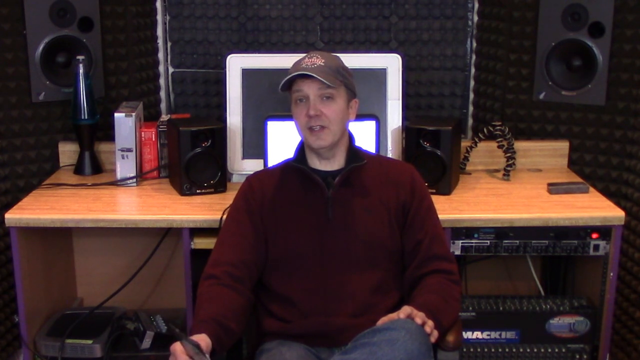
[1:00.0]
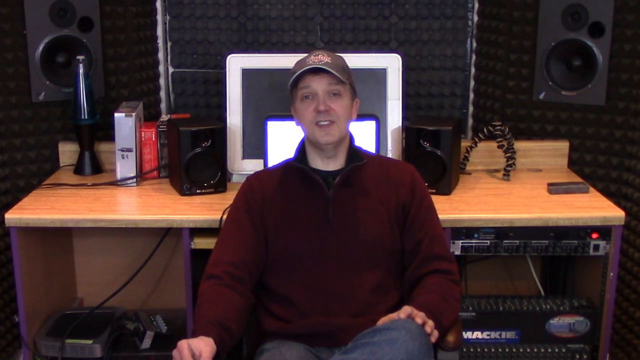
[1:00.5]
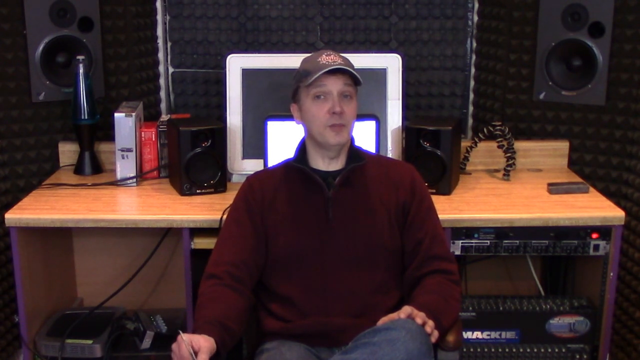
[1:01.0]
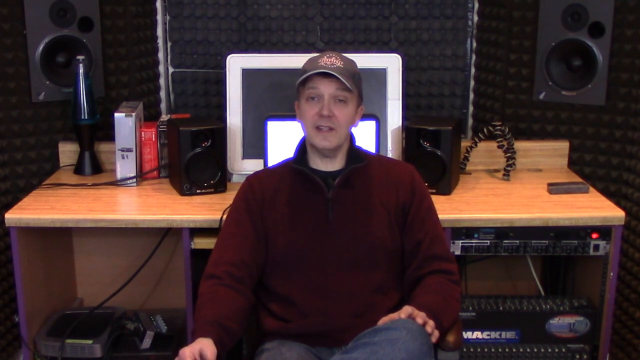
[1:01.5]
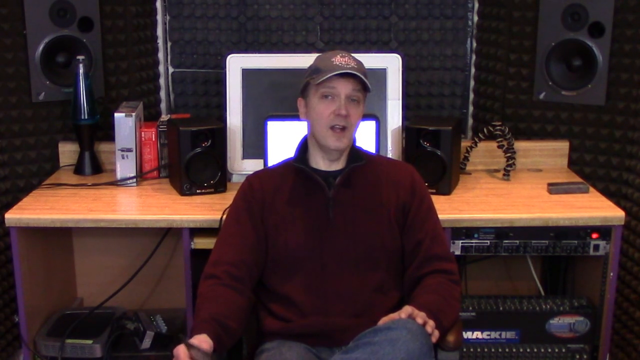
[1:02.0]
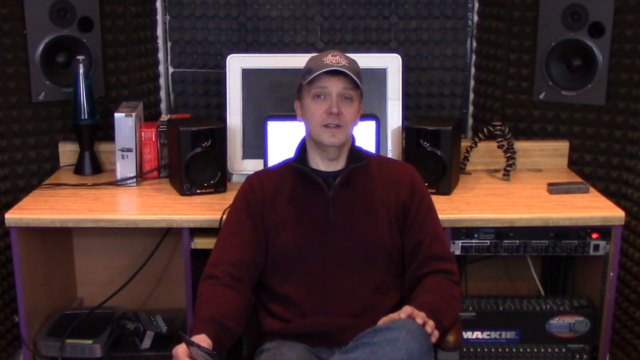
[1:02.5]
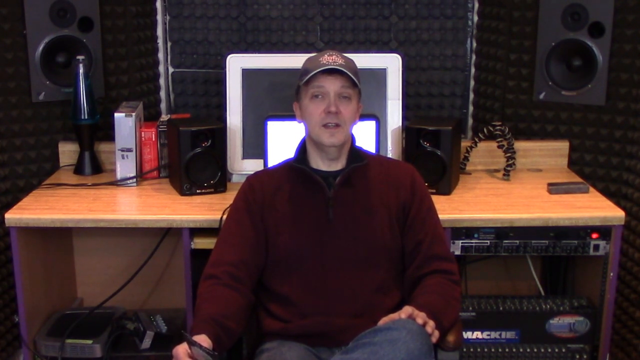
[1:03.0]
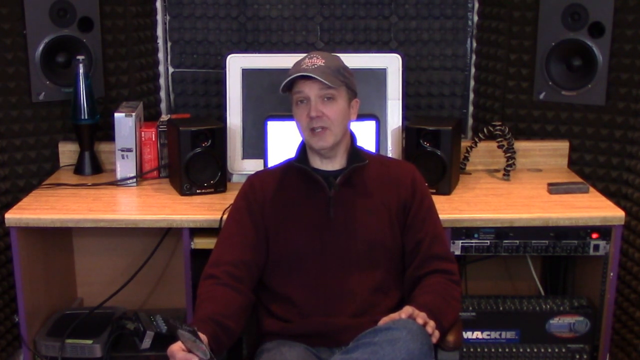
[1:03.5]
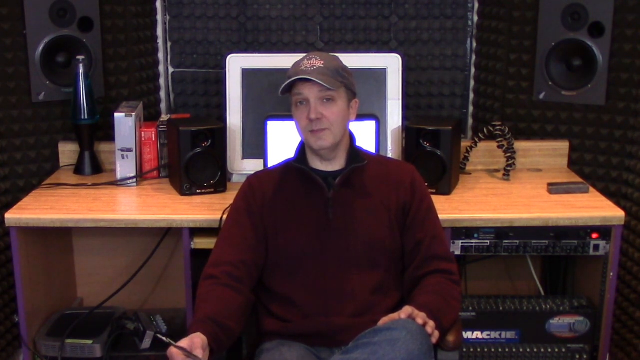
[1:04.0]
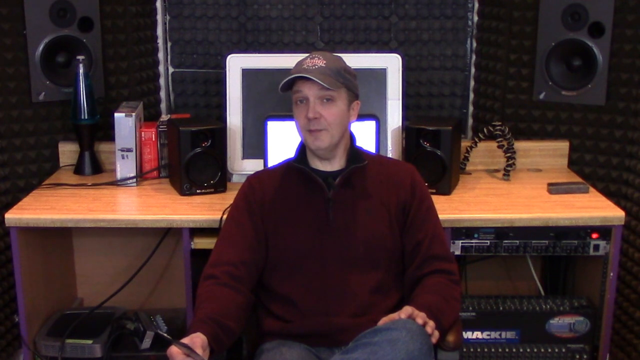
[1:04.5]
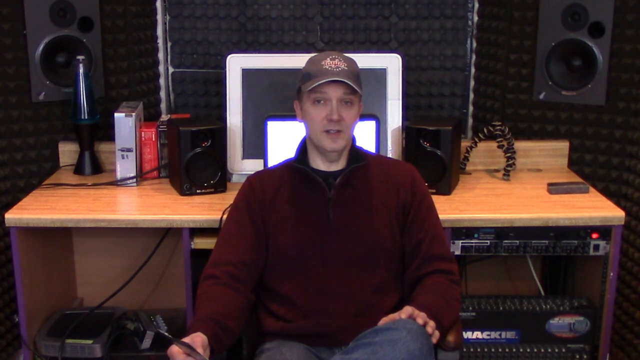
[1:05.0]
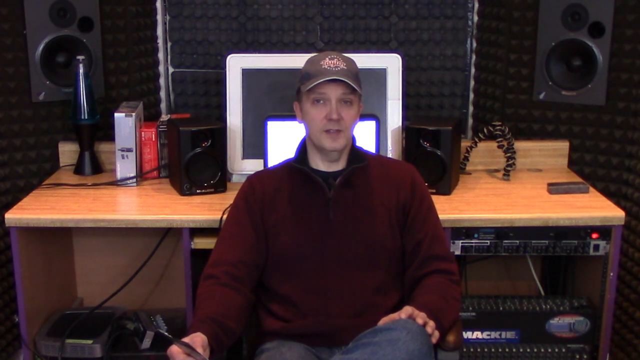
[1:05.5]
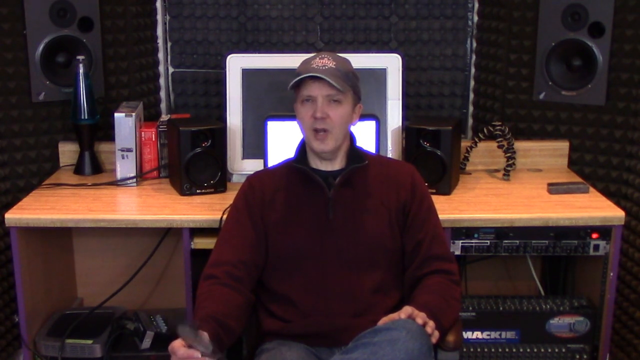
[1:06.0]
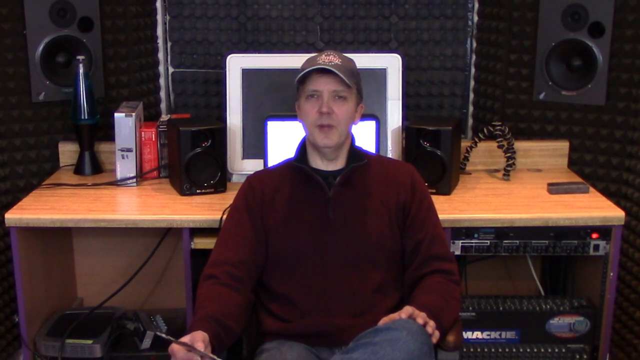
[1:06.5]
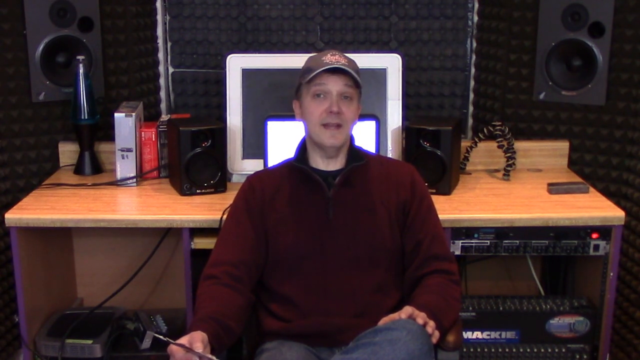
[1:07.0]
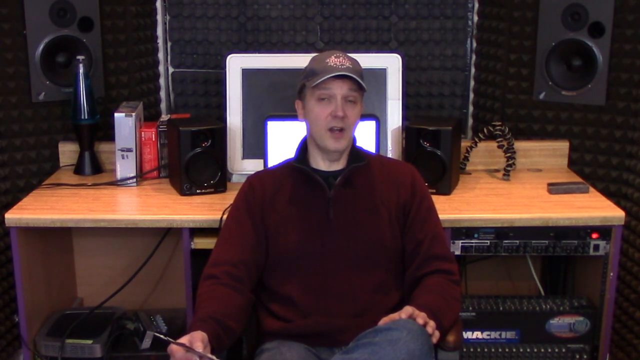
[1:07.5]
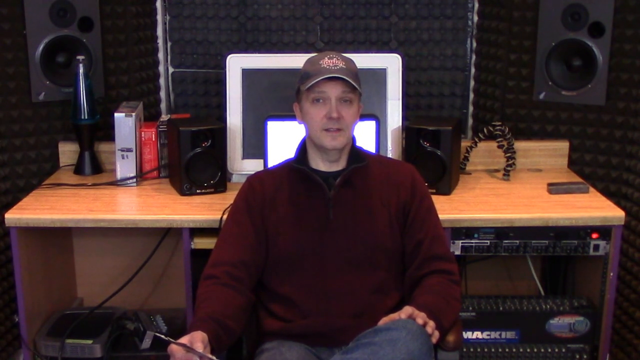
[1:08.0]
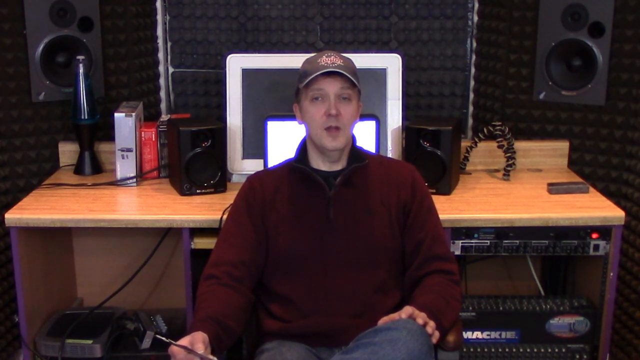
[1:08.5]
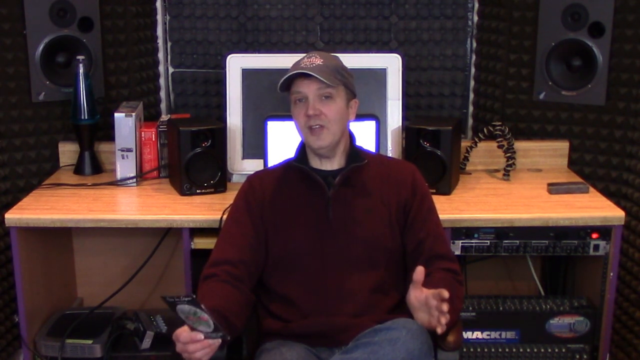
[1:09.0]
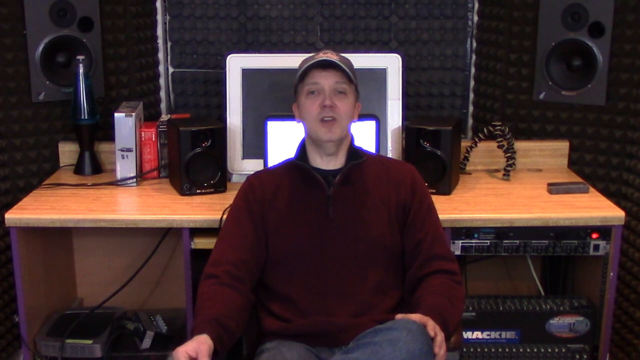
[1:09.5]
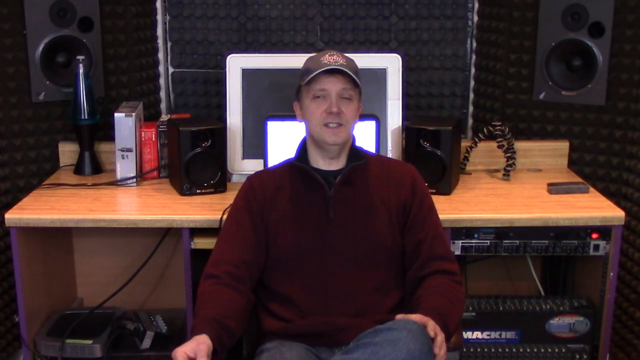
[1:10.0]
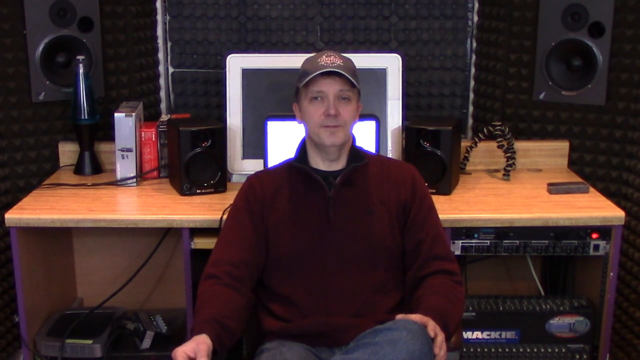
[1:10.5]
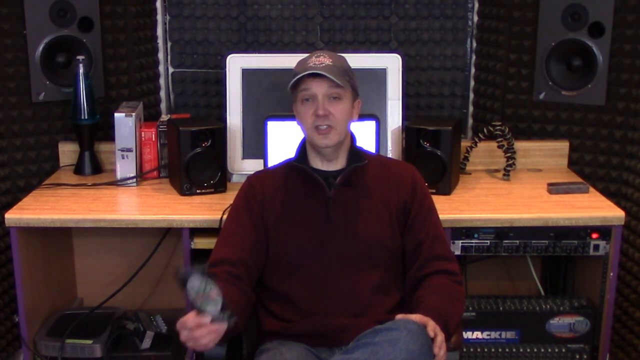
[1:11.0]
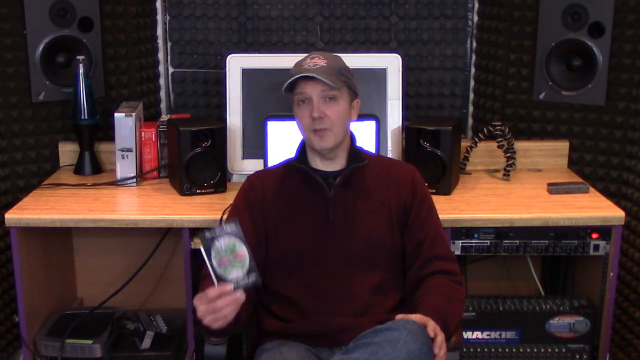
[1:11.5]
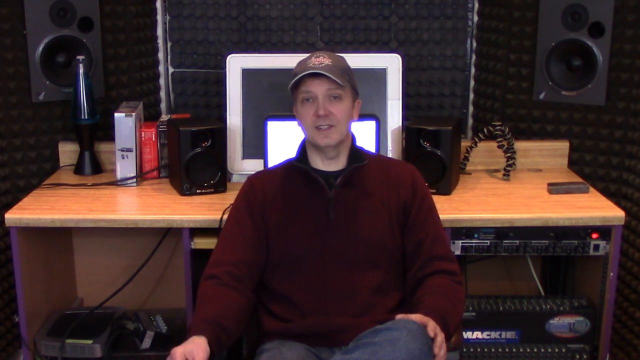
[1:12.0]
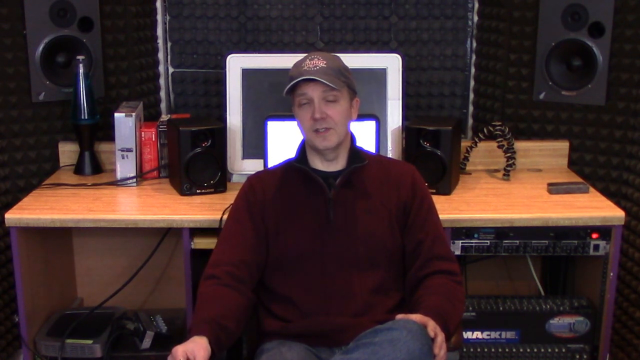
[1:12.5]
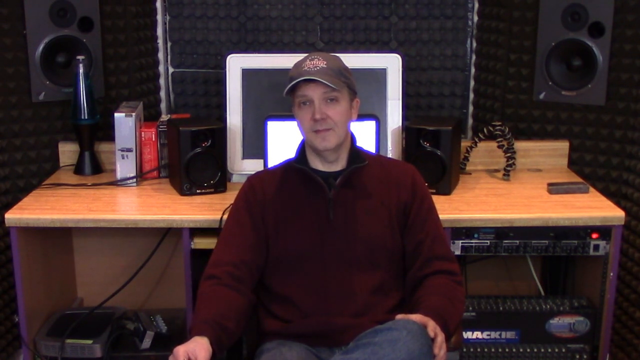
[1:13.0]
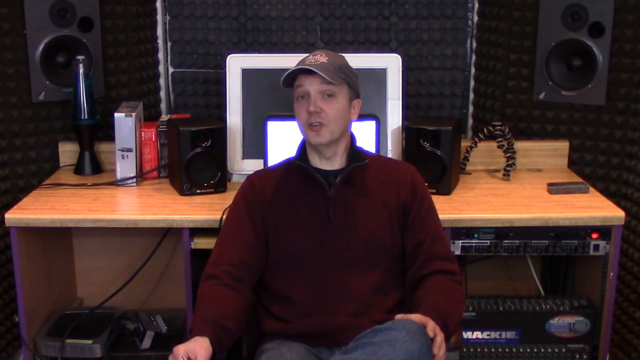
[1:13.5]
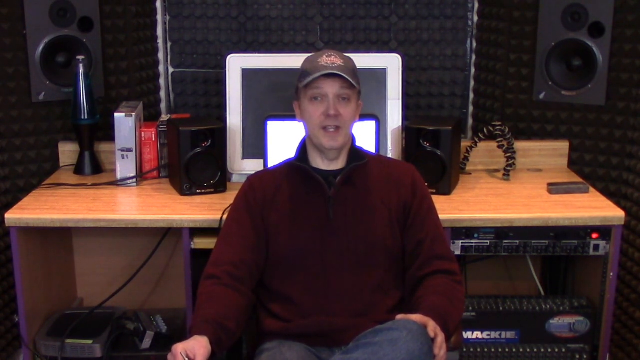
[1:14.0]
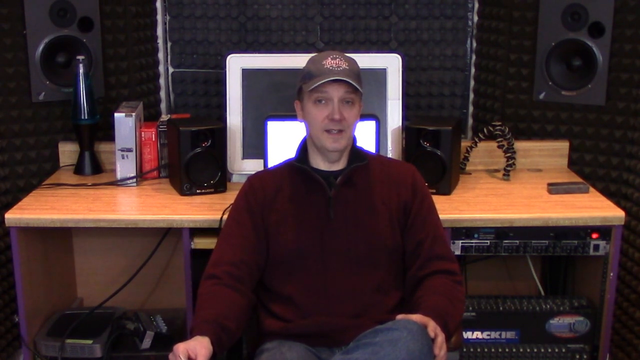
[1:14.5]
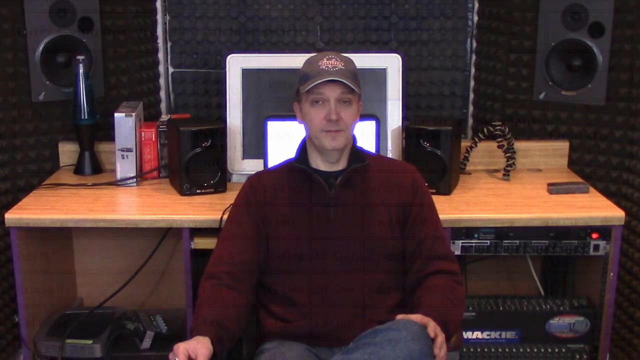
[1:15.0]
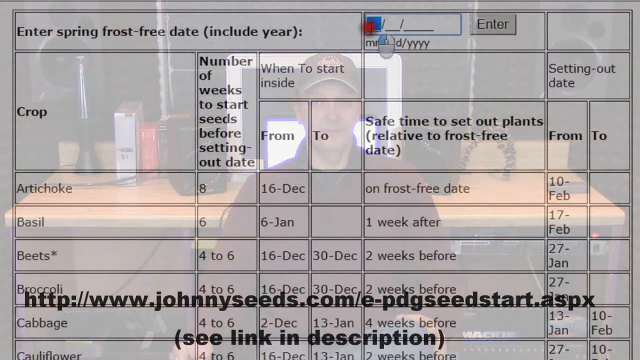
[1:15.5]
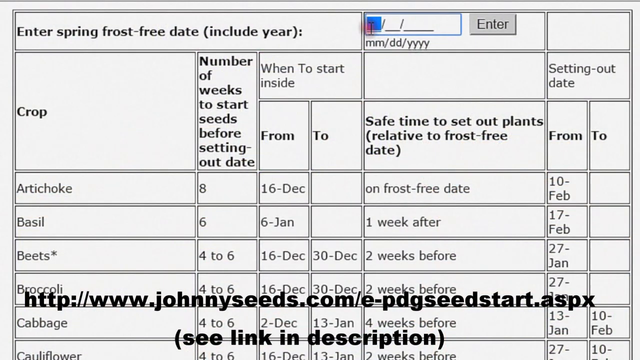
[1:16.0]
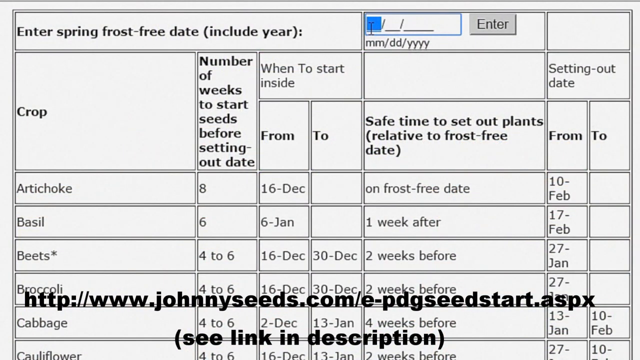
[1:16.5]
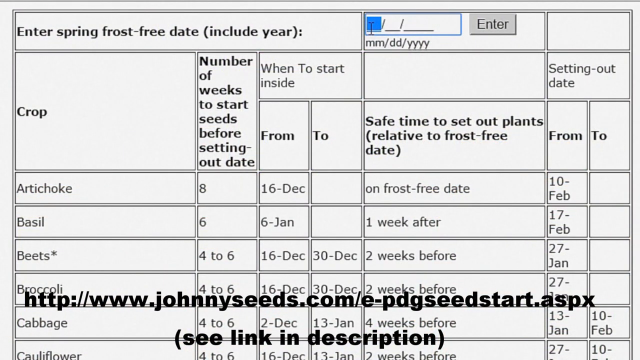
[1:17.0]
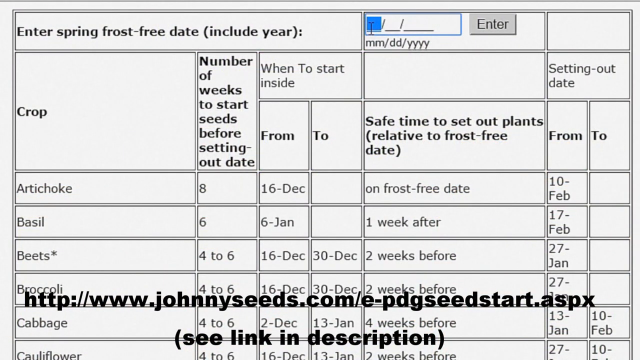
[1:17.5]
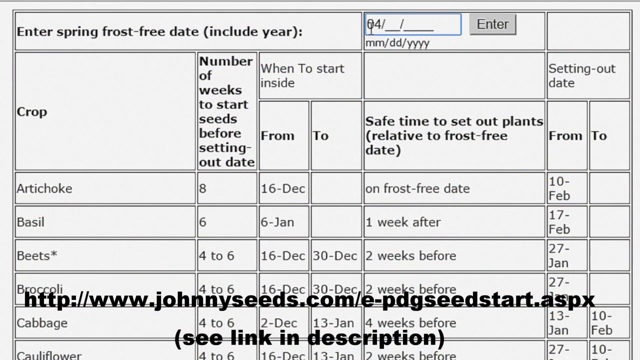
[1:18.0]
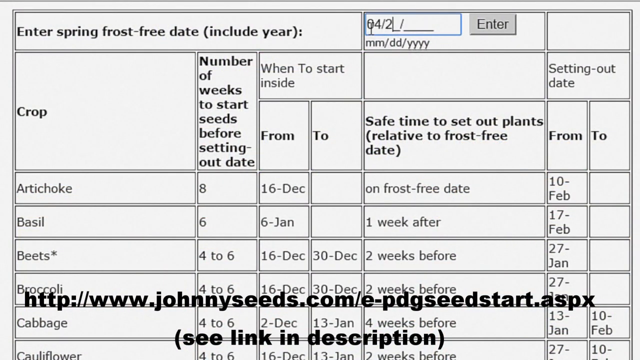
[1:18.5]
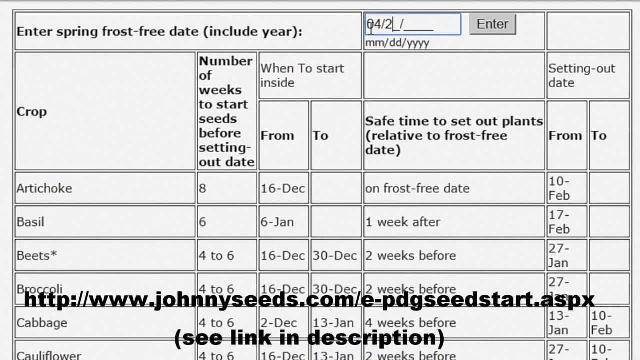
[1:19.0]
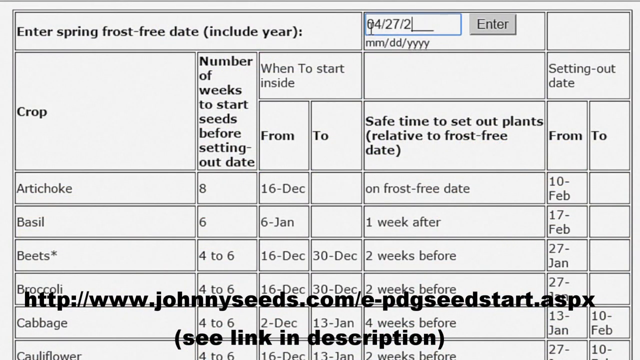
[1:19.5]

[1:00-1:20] Patrick Dolan continues presenting to the camera, waving the leaflet in his right hand and sometimes holding his left hand up to make a point. He briefly flashes the image on the front of the leaflet. The video then returns to a computer screen on the website johnnyseeds.com, where a frost-free date is entered into a table. The table takes a date at the top and gives a list of crops, how many weeks before setting out to start the seeds, an indication of when to start, and the safe time to set out plants relative to the frost-free date. For example, cabbage can safely be set out four weeks before the final frost date, while basil should go out only one week before. The user enters the date the 27th of April.